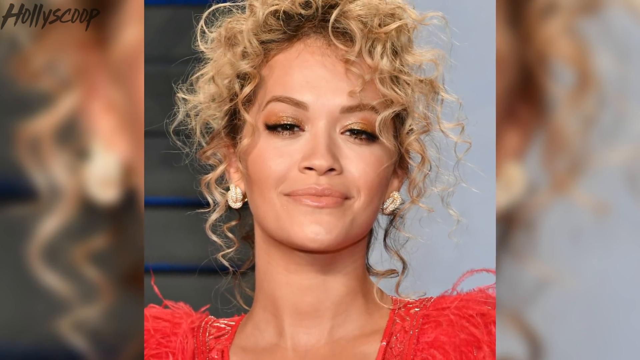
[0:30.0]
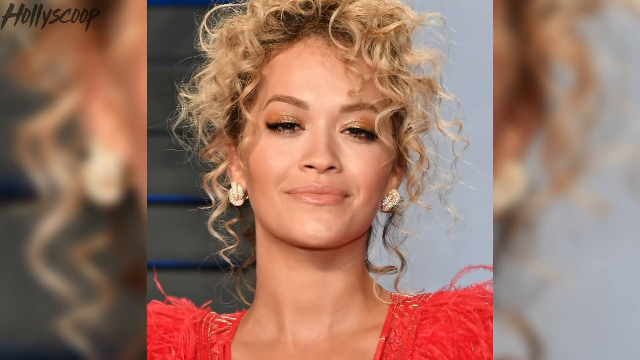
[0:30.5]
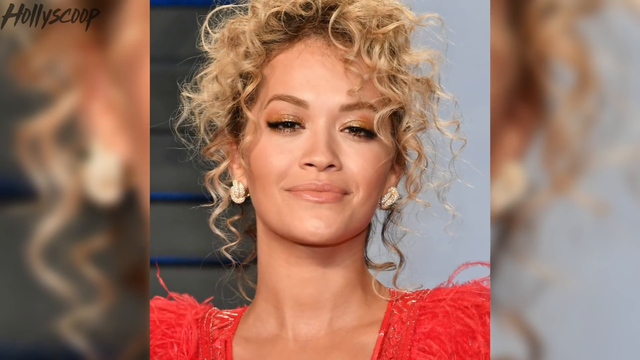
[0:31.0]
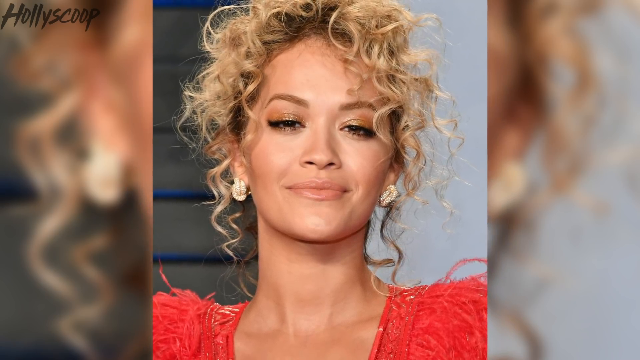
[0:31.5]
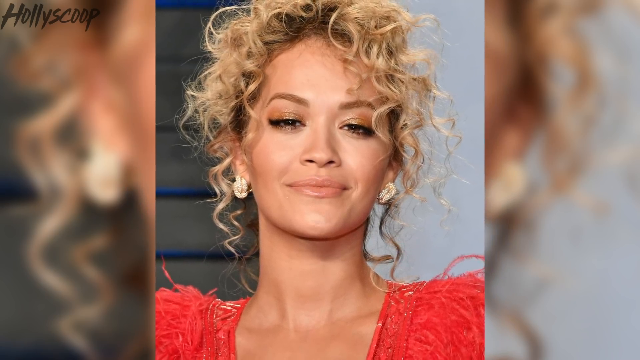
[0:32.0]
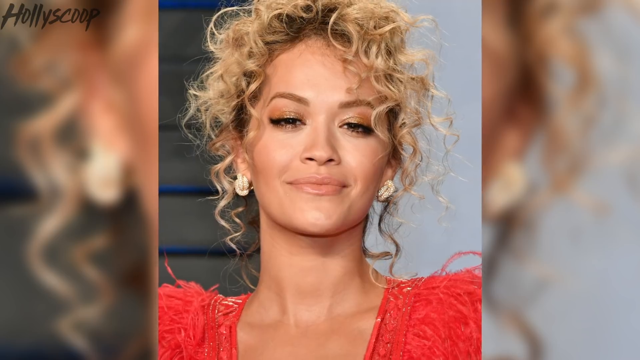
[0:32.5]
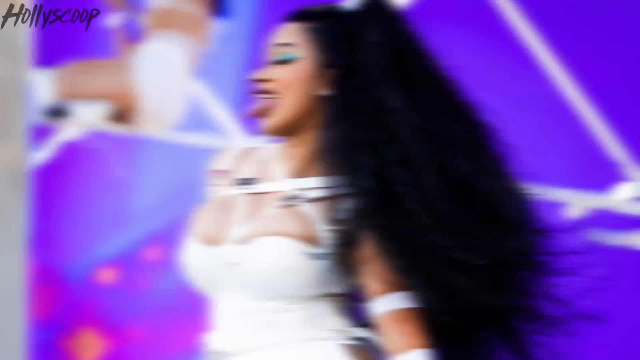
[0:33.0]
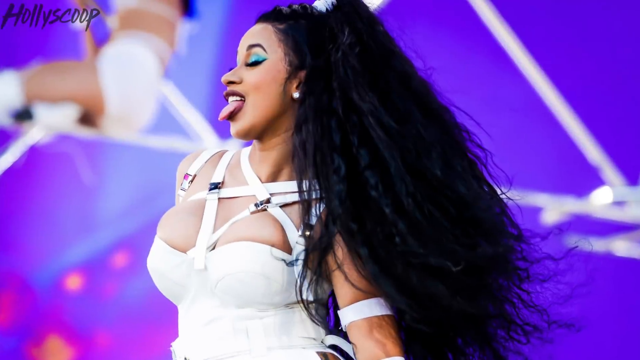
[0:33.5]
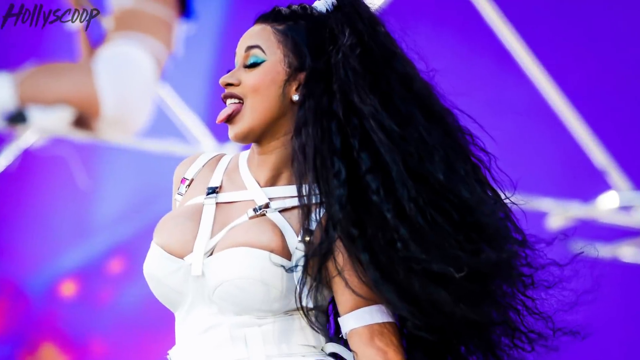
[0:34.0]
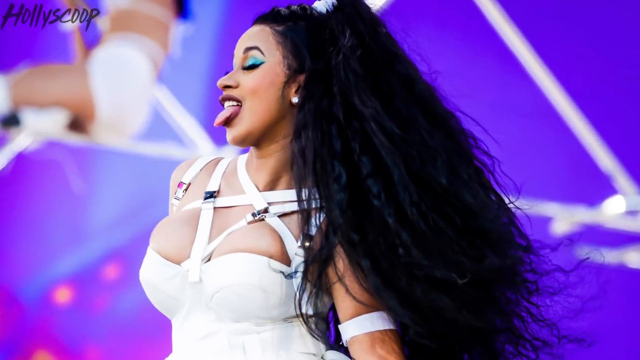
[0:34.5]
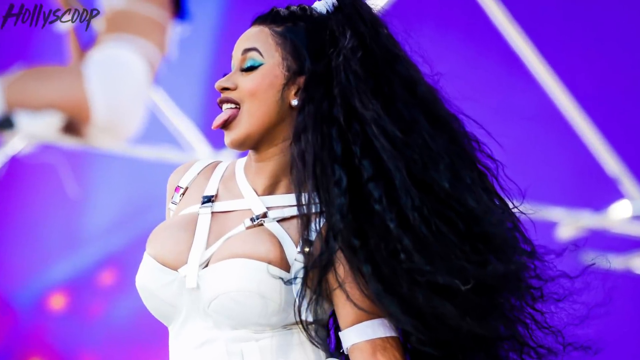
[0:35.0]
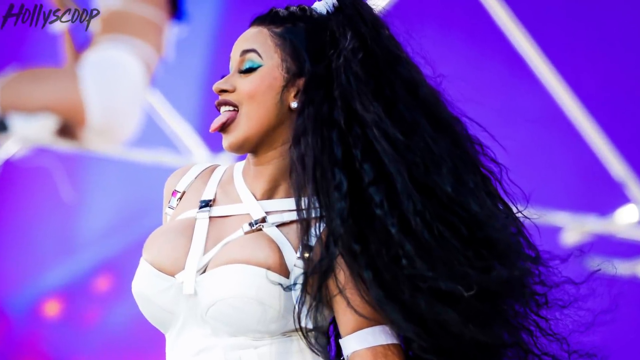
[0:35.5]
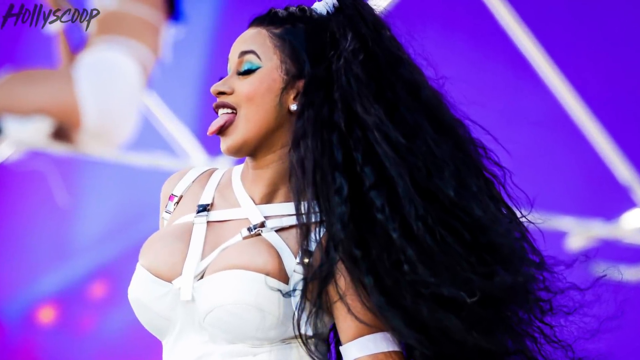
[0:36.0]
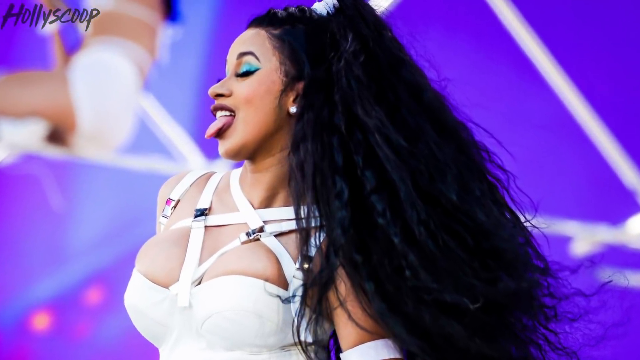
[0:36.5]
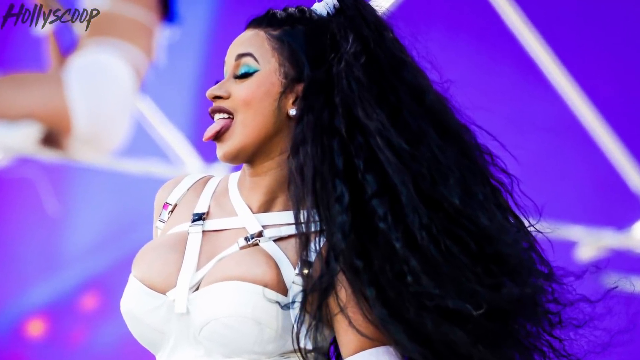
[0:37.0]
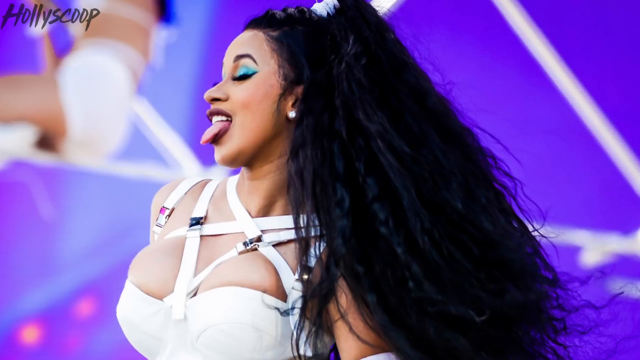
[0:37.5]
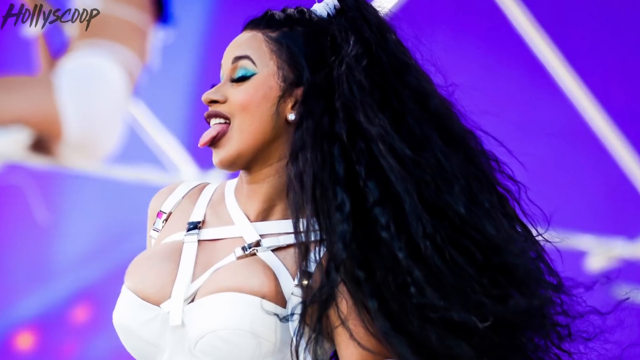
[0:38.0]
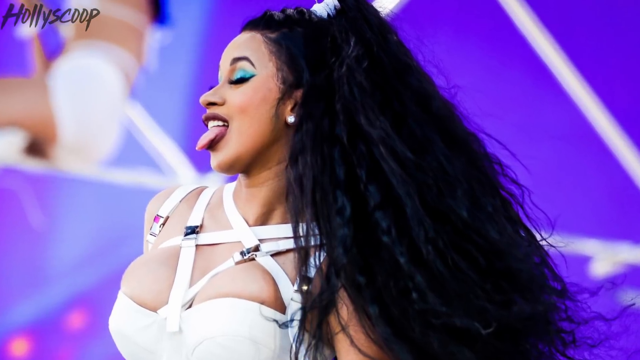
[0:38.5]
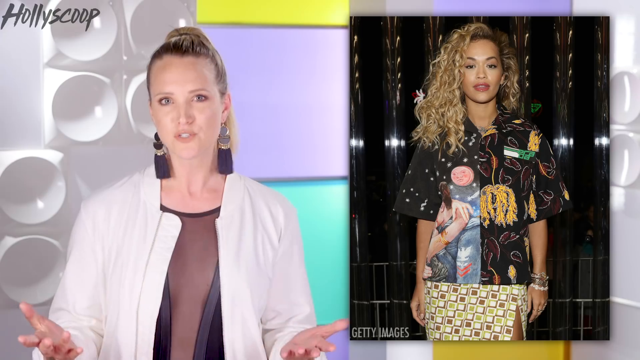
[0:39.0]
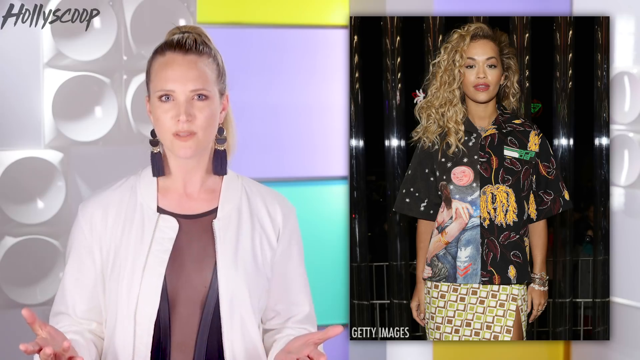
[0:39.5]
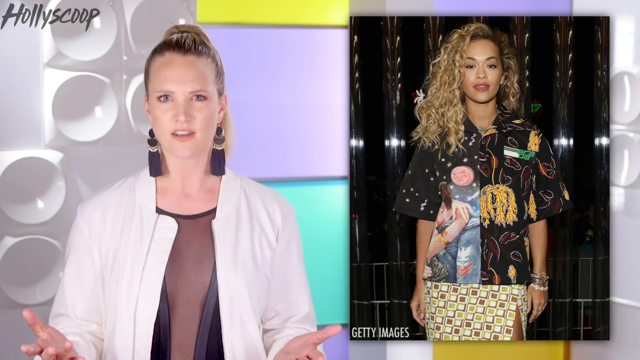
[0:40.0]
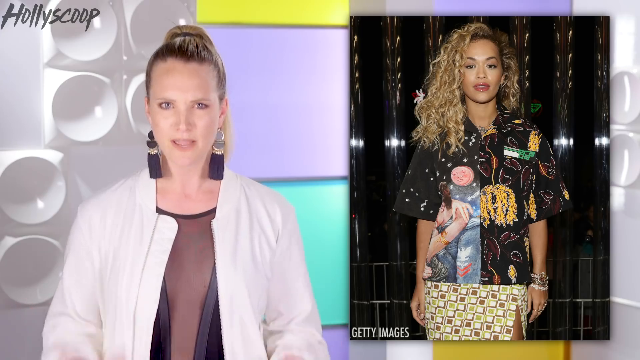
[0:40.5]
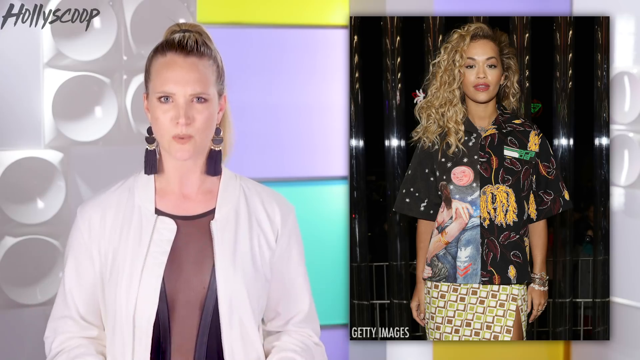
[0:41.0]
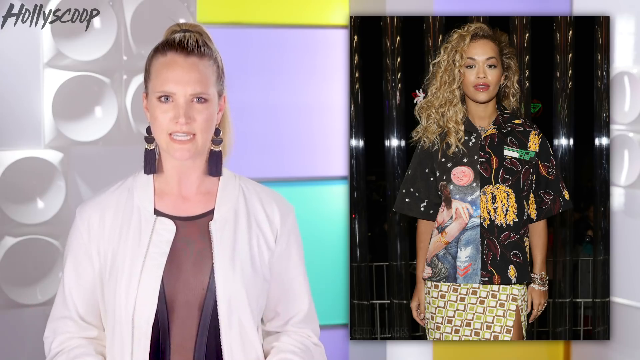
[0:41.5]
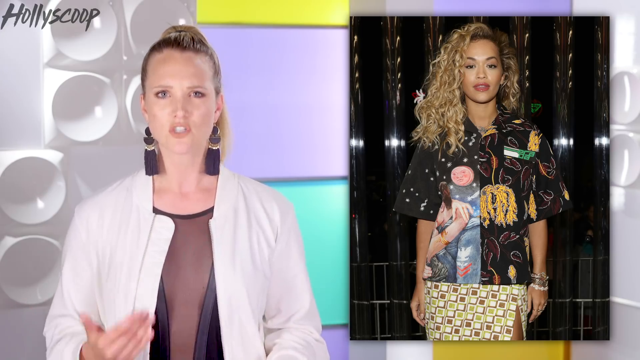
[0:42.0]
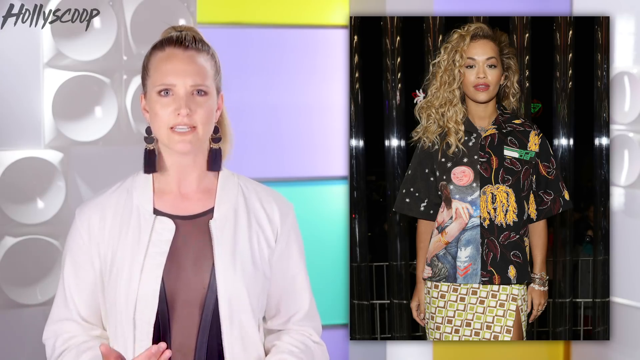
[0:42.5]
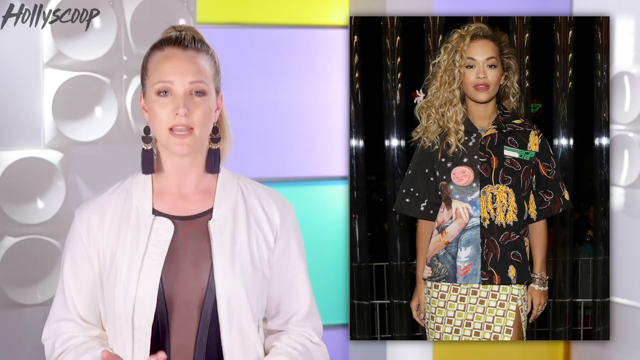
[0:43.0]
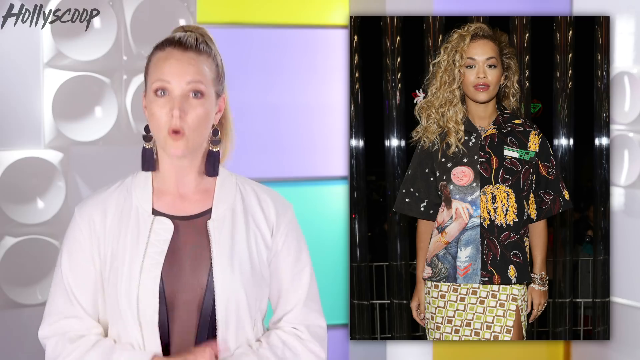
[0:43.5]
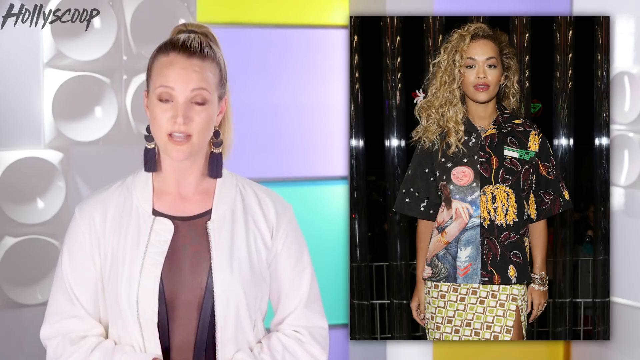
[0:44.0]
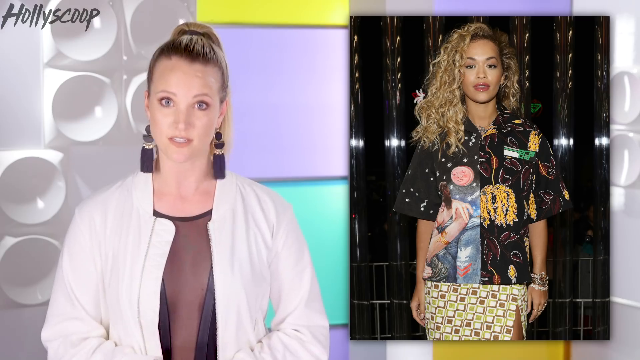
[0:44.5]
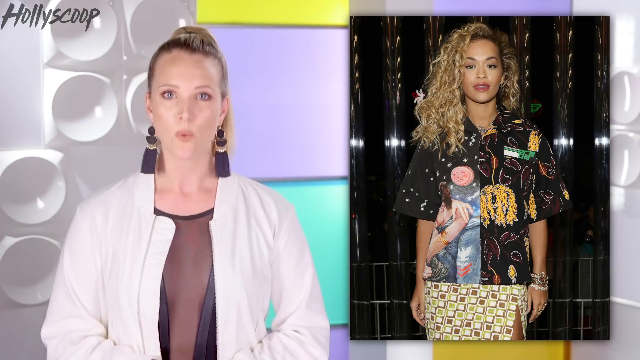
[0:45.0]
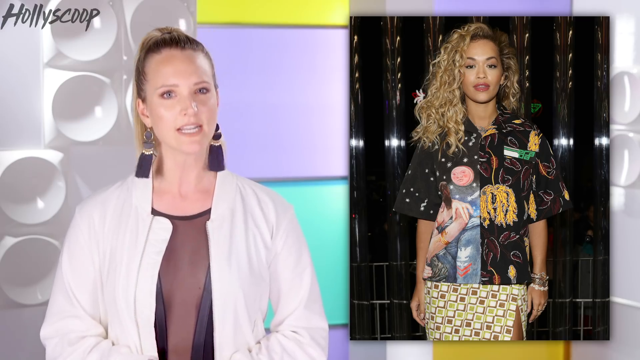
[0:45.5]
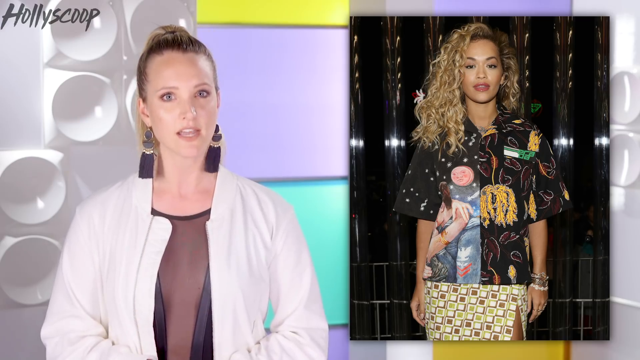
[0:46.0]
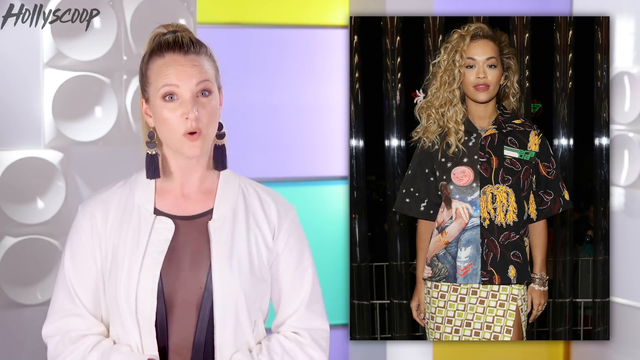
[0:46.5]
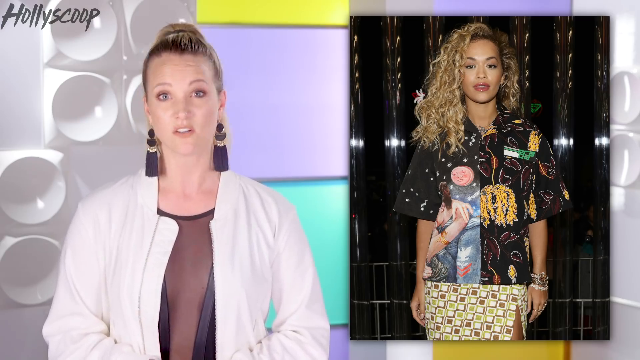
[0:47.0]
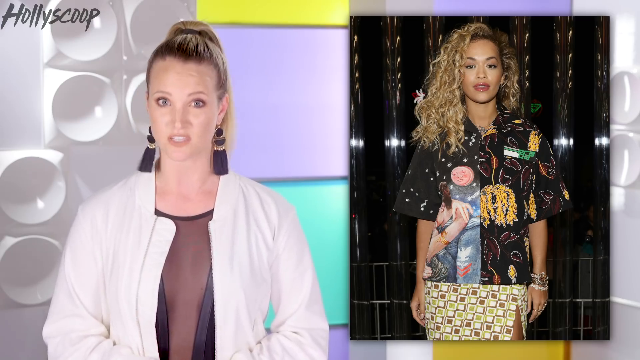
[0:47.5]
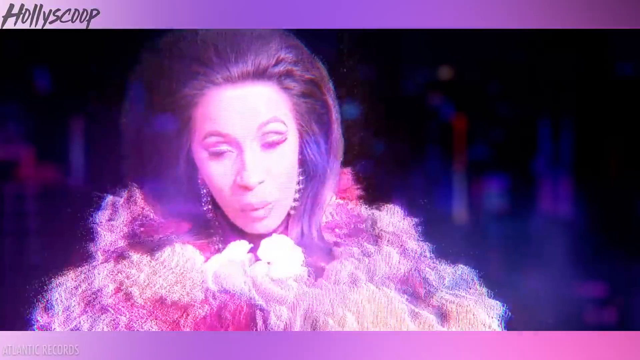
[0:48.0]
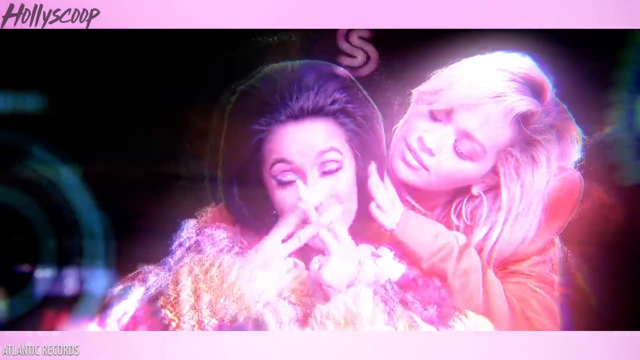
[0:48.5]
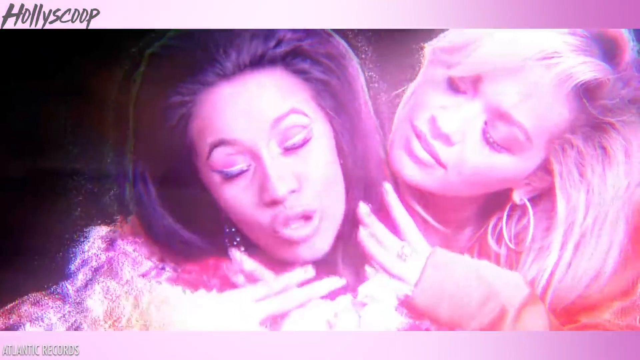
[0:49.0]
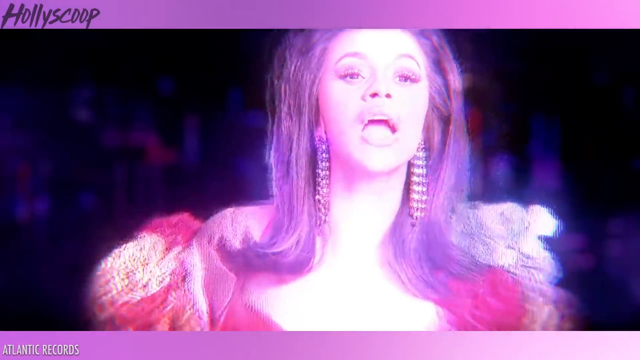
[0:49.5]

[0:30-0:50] A headshot shows Rita Ora with short, curly blonde hair, wearing what appears to be orange eye shadow and thick lashes; only the upper shoulder part of her red feathery dress is visible. The image zooms out, then changes to a side-angle shot of Cardi B in a white bustier-style top with crisscrossing straps across the chest and arms. She sticks her tongue out with her eyes closed, wears teal eye shadow, and her hair is long, flowing and voluminous like a lion's mane. The image zooms in to Cardi B's face before cutting back to the host, who has an almost shocked expression, her head and facial gestures changing rapidly. The video then cuts away to what appears to be a music video showing Cardi B and Rita Ora in a pink holographic pattern: Cardi B sings while Rita Ora briefly embraces her from behind, then it cuts to Cardi B alone singing in the pink holographic pattern. Both wear very furry outfits and high-volume hairstyles.